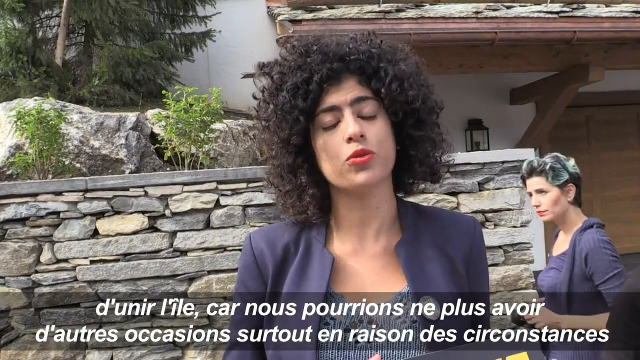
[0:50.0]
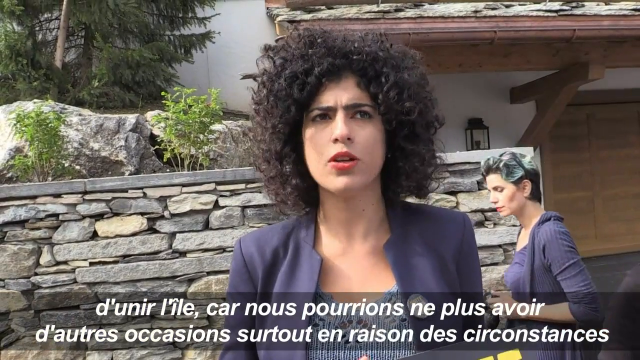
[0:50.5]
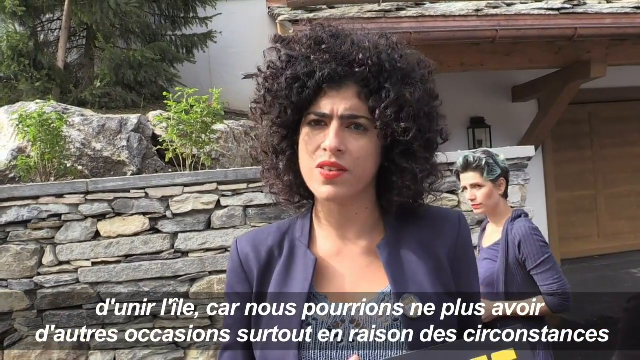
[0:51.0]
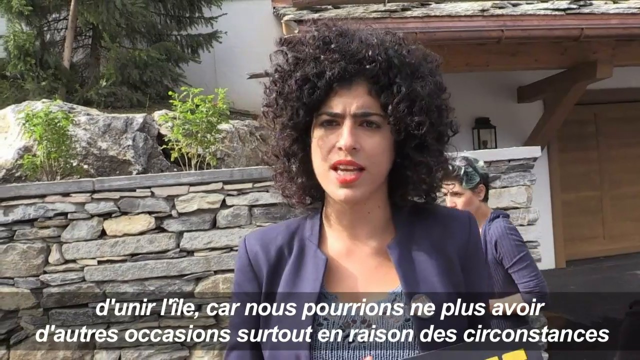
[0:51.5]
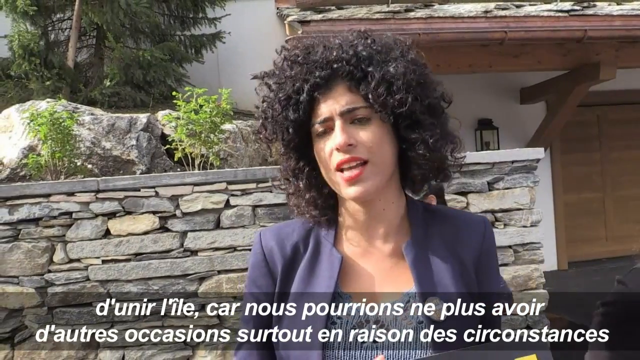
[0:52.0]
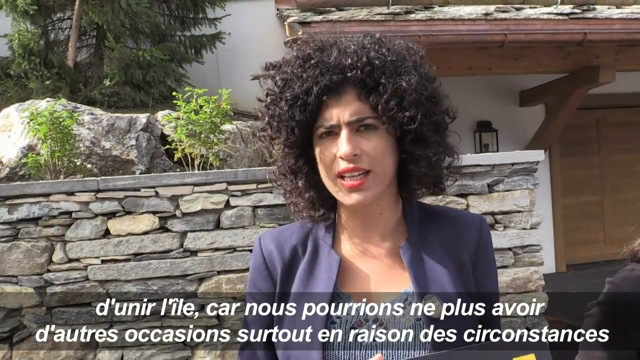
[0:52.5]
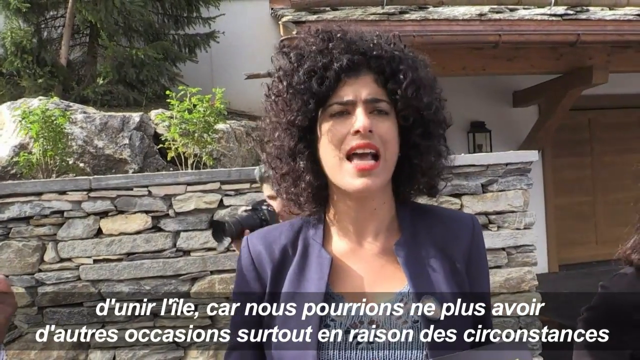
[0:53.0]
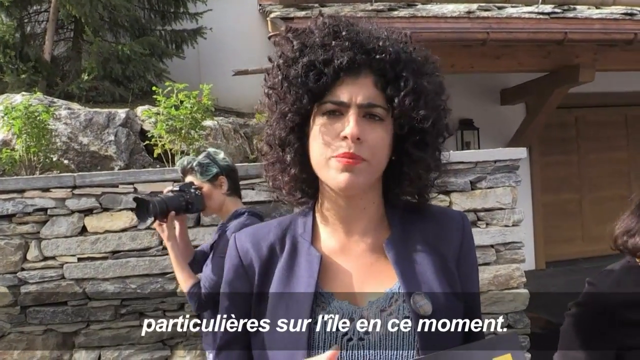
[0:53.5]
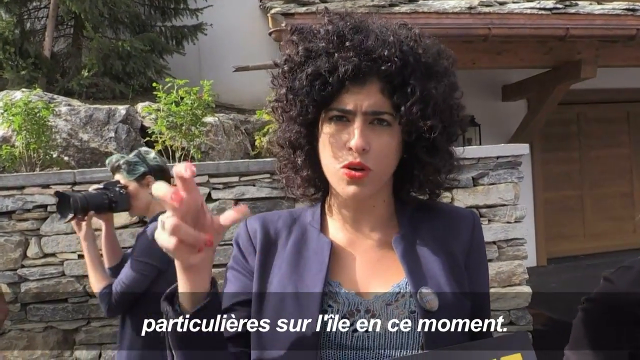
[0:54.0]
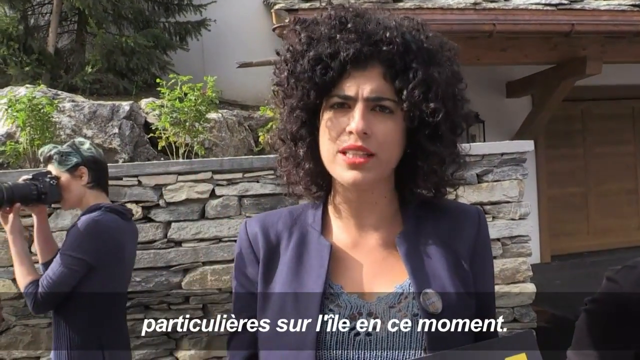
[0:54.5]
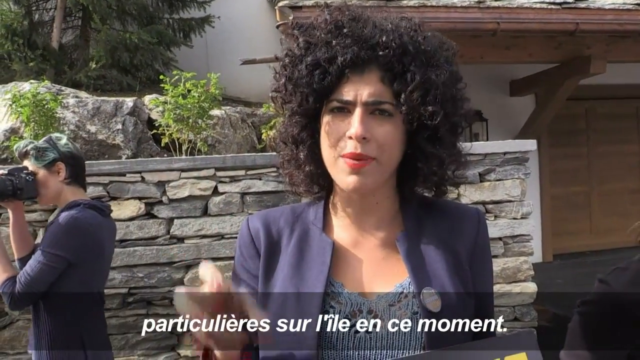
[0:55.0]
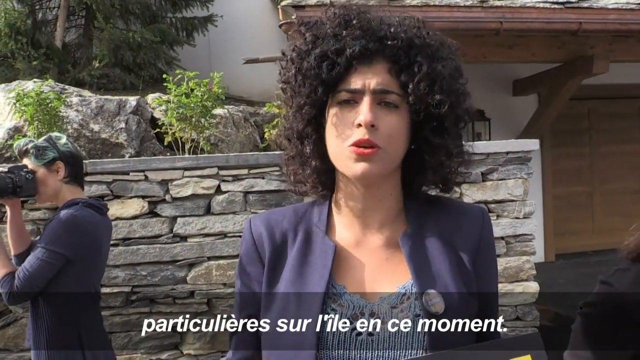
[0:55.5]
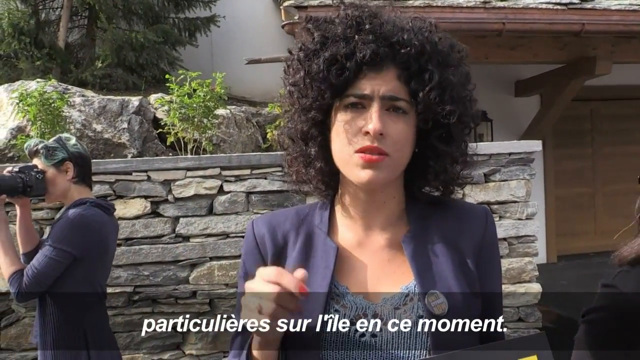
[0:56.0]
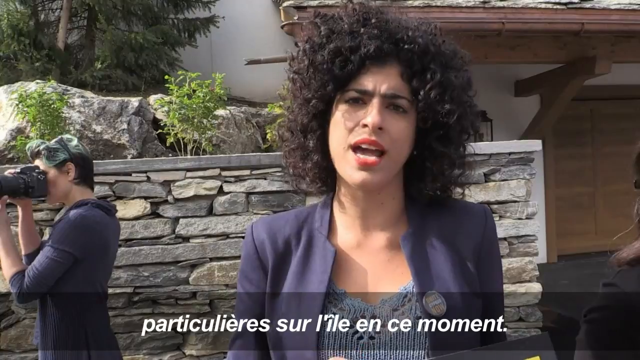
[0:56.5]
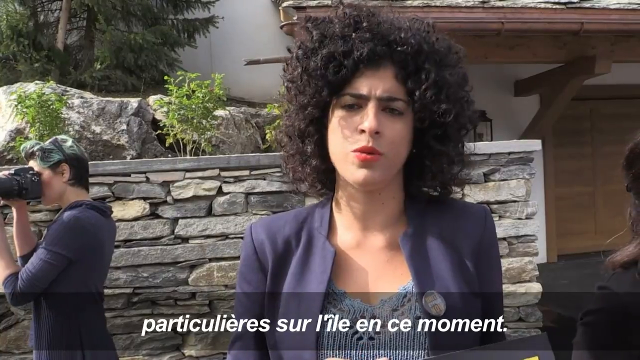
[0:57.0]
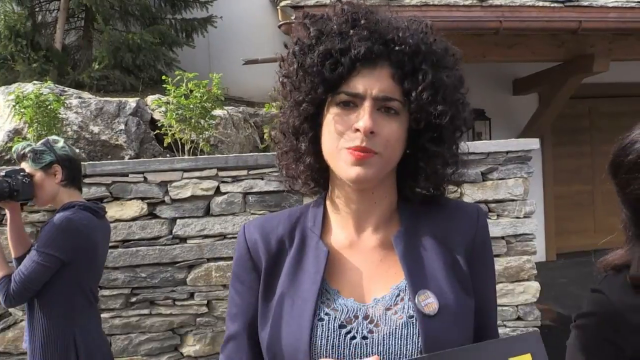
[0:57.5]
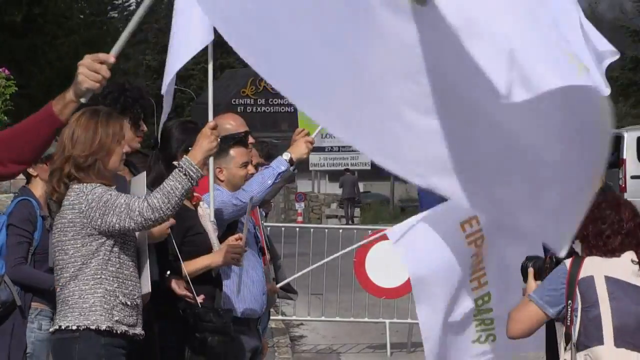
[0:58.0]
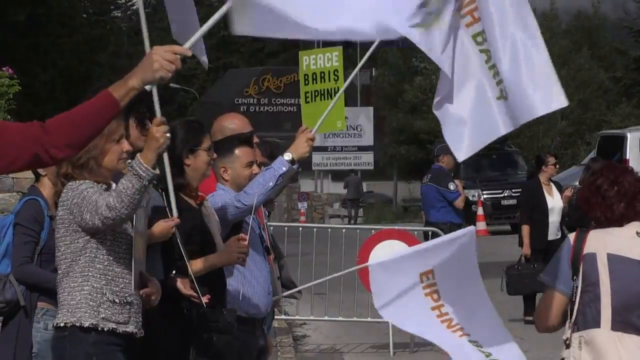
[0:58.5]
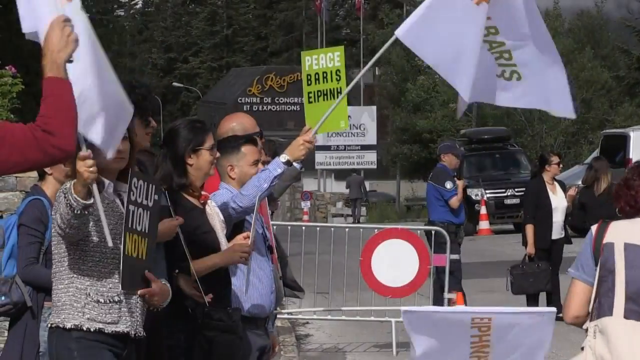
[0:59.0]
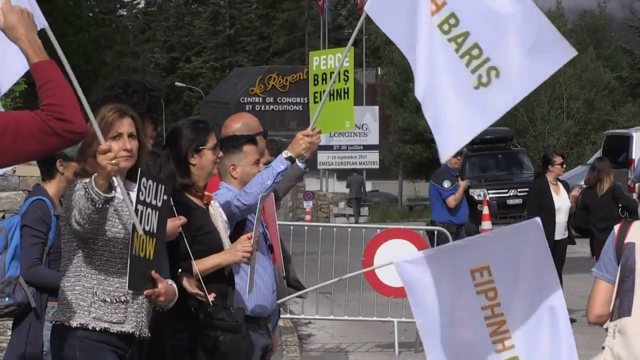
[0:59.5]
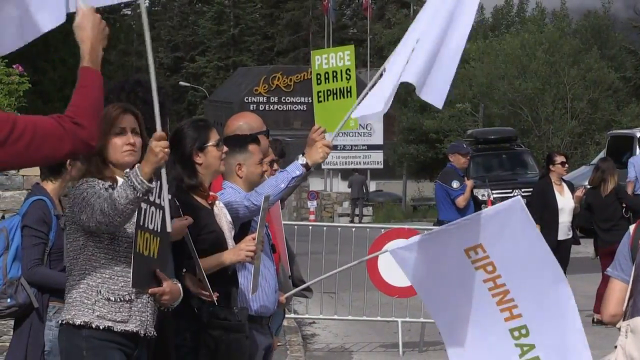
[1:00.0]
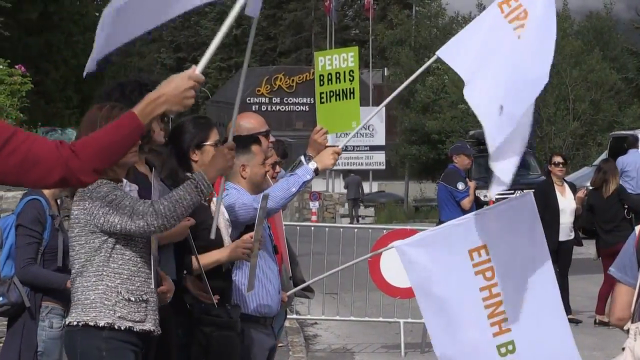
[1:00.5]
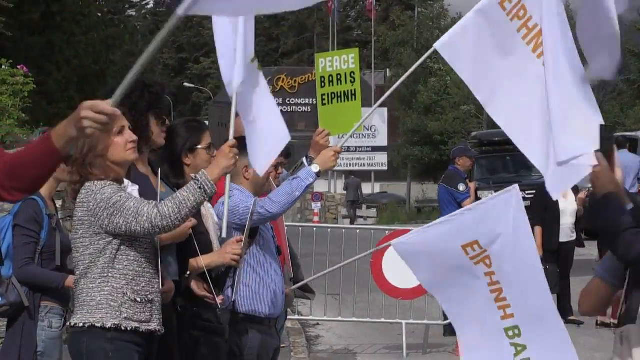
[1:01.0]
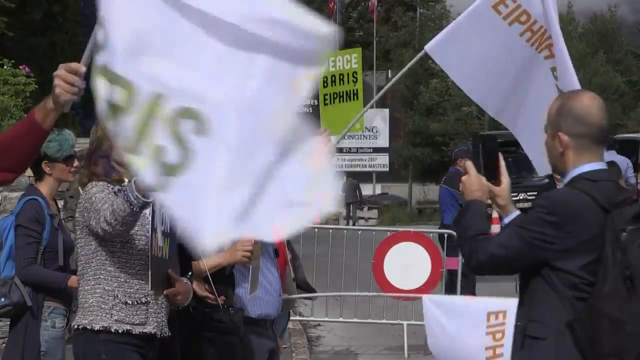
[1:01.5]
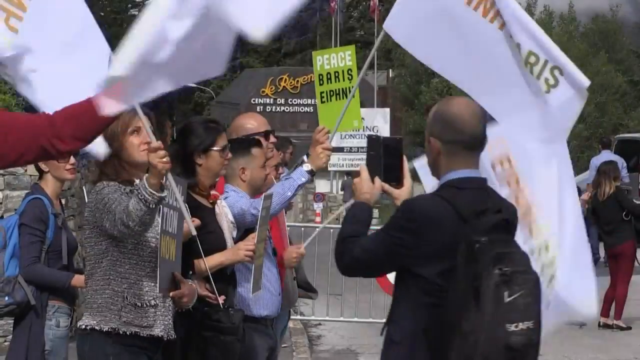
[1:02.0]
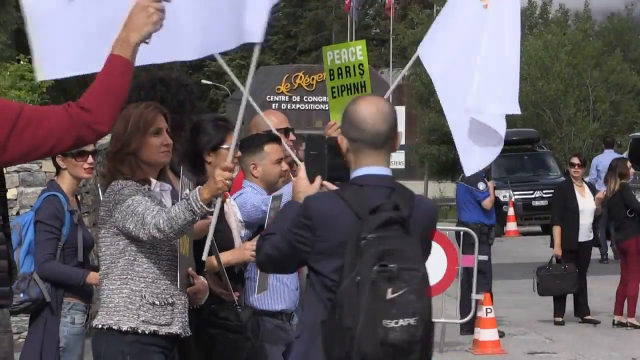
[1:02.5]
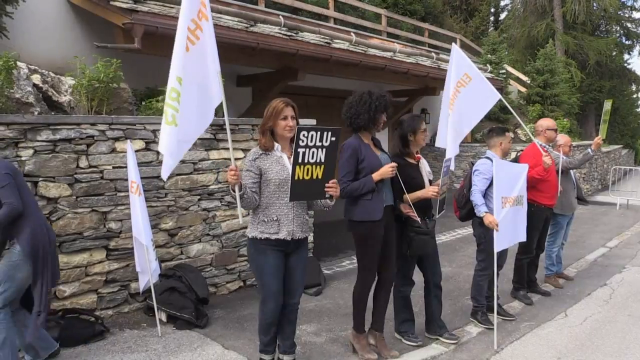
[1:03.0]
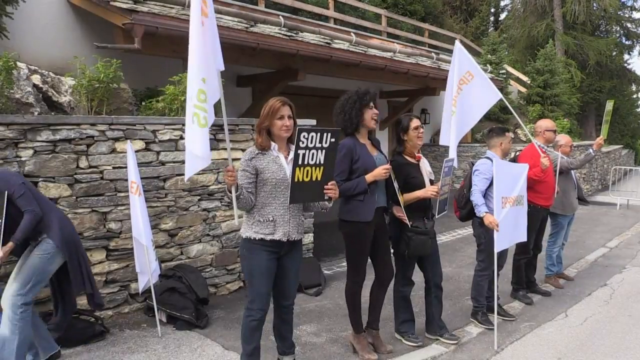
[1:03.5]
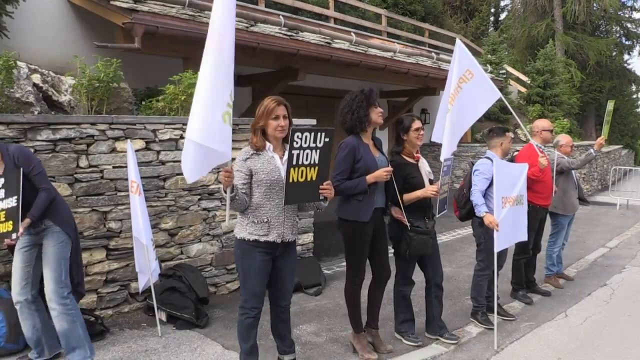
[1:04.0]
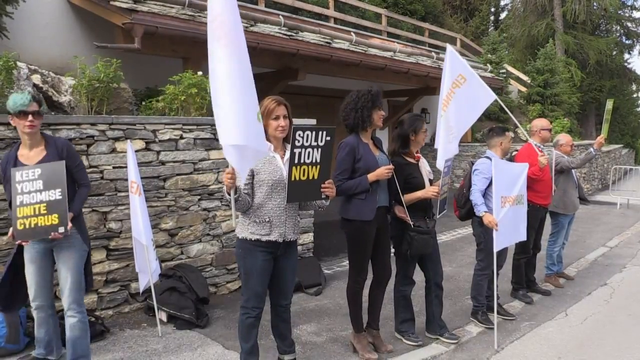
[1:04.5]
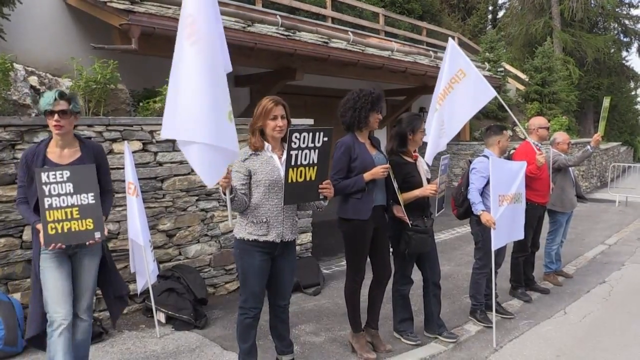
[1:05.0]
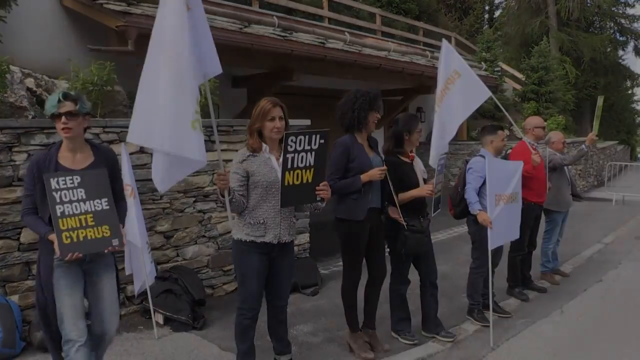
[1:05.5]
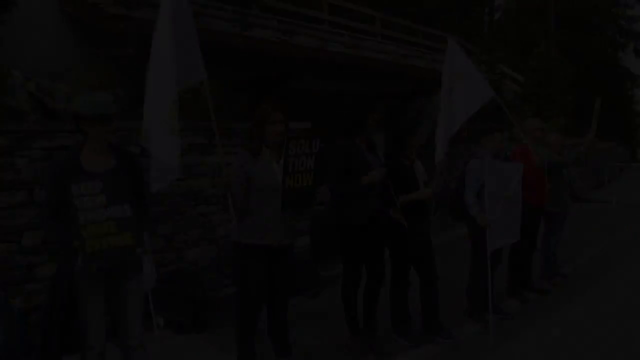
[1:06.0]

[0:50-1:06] A woman with lots of curly dark hair and light olive skin, wearing a purple suit with a lighter-colored scoop-neck blouse underneath, looks directly at the camera and speaks emphatically, looking angry. She is standing outdoors in front of a stone wall. Behind her is the woman with light teal and black hair in a purple sweater or shirt, taking photos with a large camera with a long lens, so she is possibly a reporter or journalist. The next image shows maybe a dozen protesters waving white flags that say "EIPHNH BARIS"; some sort of security officer and a couple of cars are in the background, and nobody is jumping around. Next, six or seven protesters wave flags. The woman who was taking photos has put down her camera and holds a black sign that says "Keep your promise, unite Cyprus". Next to her is another white woman with reddish hair and a gray jacket holding a white flag and a black sign that says "Solution now". Then comes the woman with all the dark hair and a purple jacket, unclear whether a journalist or a spokesperson for the group, followed by three or four more people waving flags.